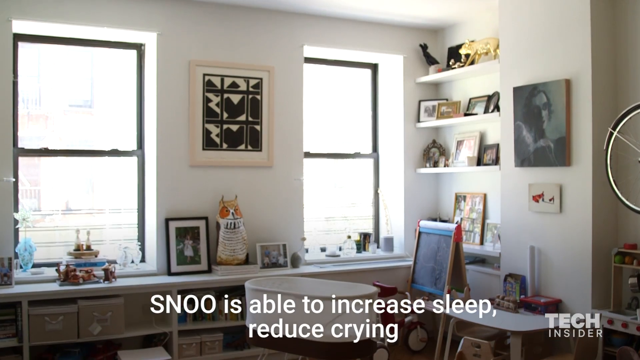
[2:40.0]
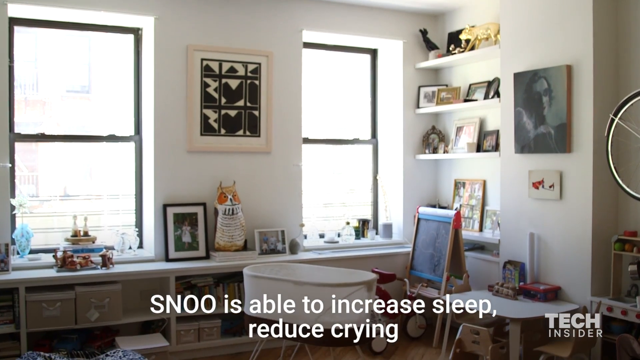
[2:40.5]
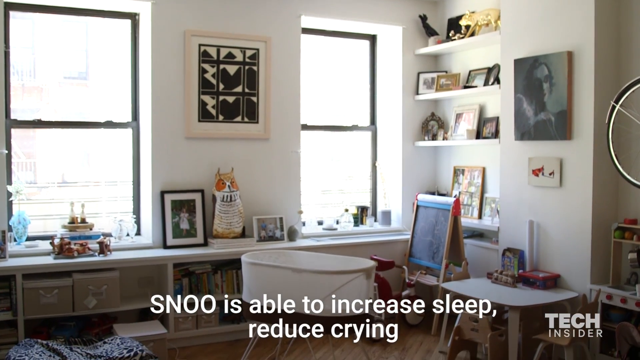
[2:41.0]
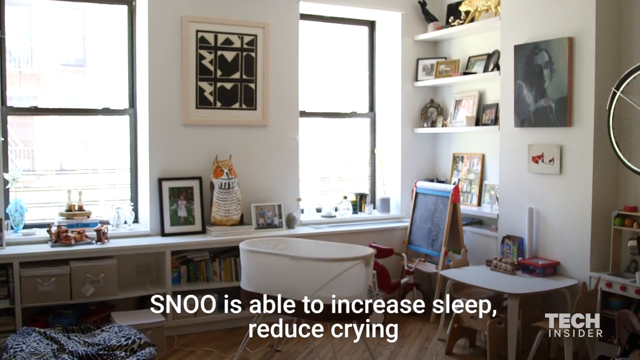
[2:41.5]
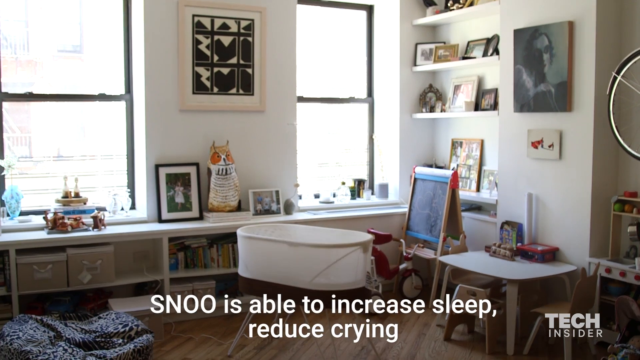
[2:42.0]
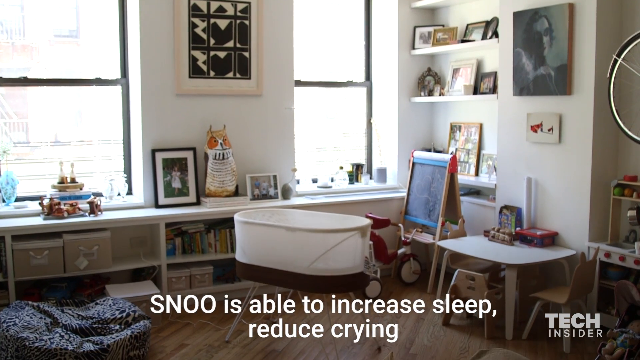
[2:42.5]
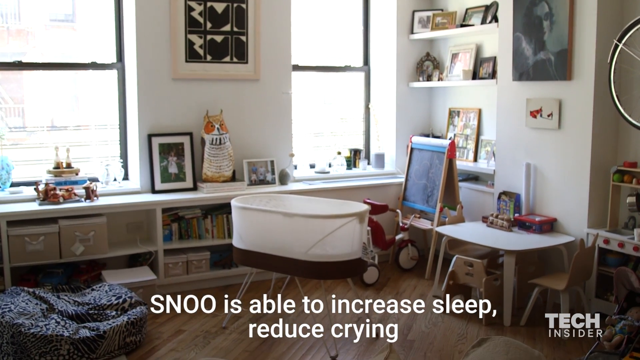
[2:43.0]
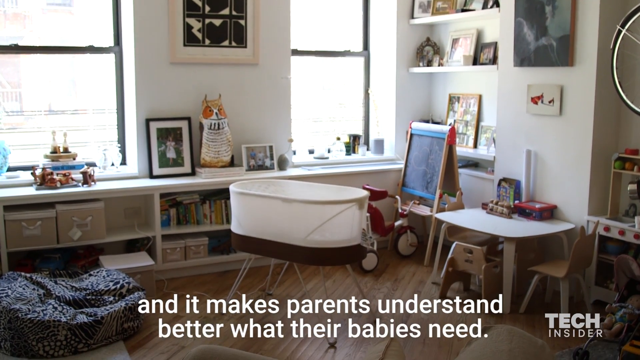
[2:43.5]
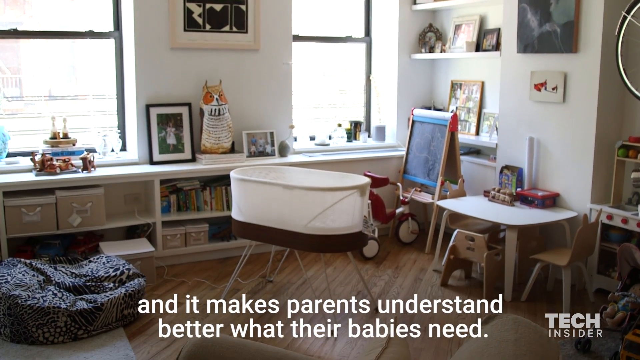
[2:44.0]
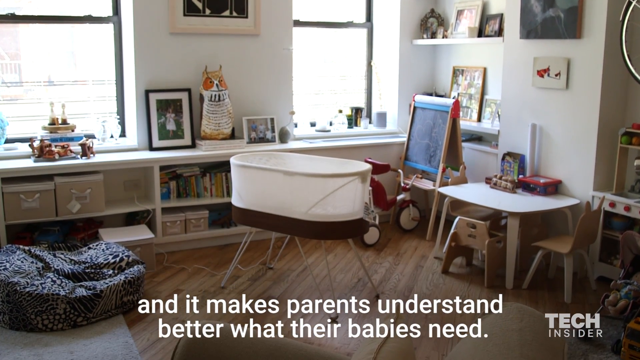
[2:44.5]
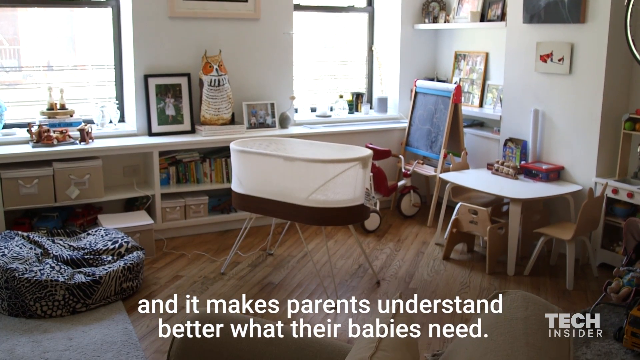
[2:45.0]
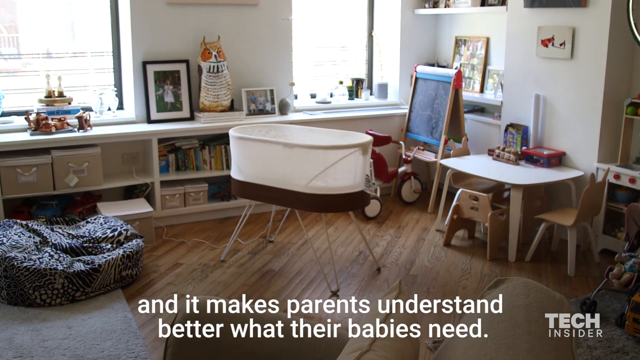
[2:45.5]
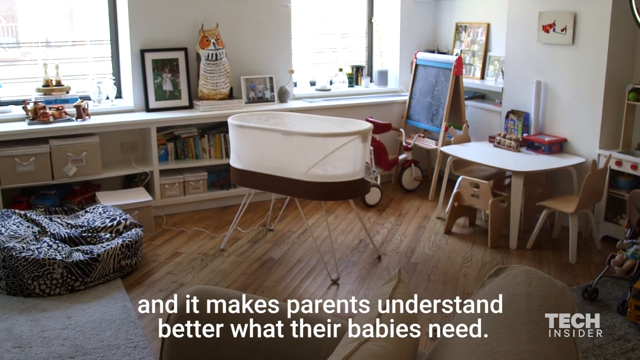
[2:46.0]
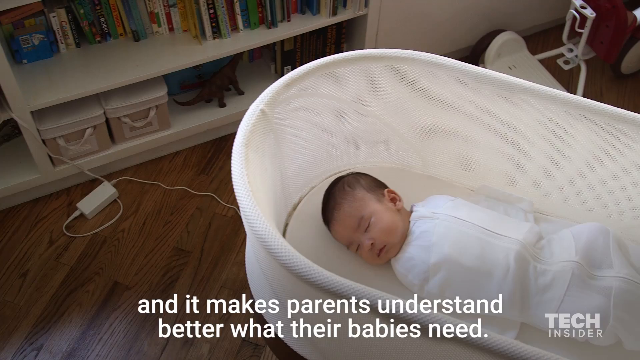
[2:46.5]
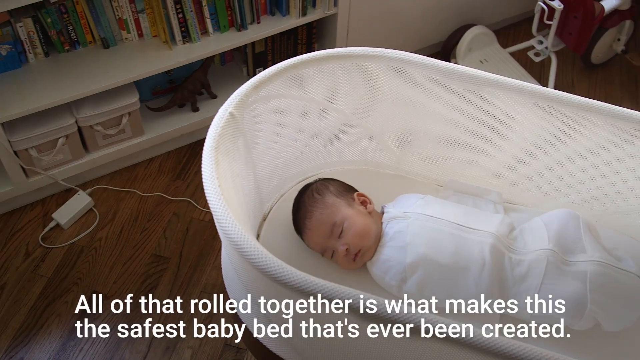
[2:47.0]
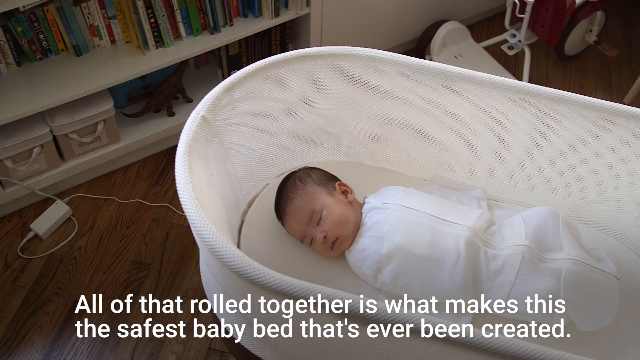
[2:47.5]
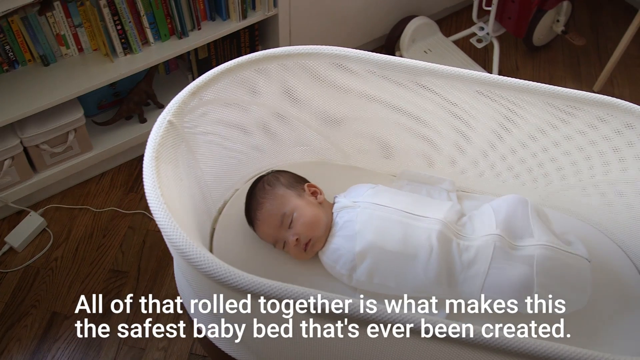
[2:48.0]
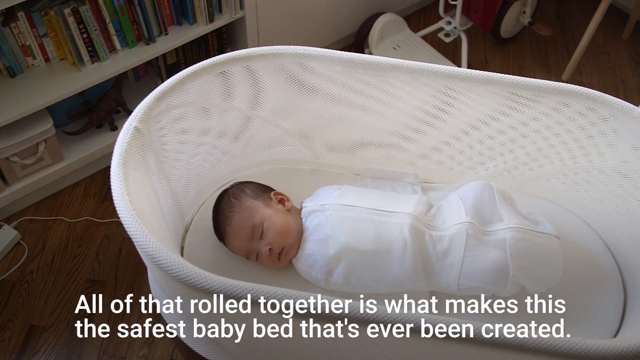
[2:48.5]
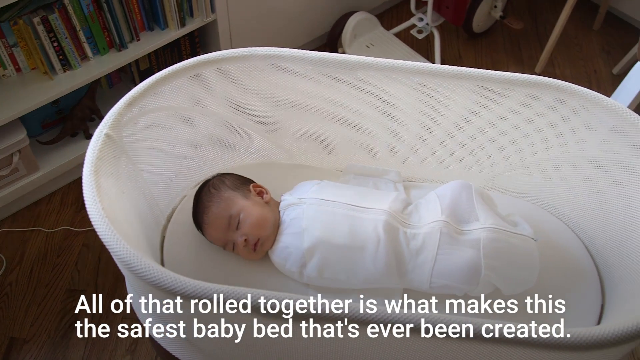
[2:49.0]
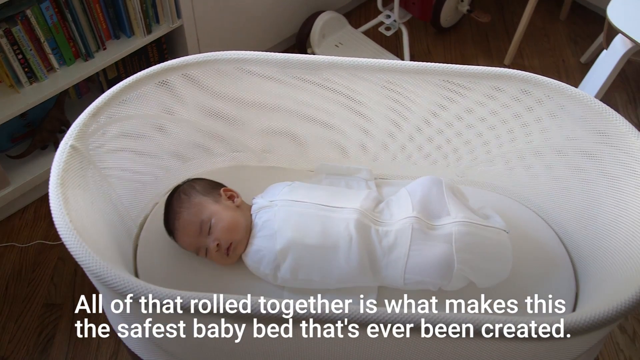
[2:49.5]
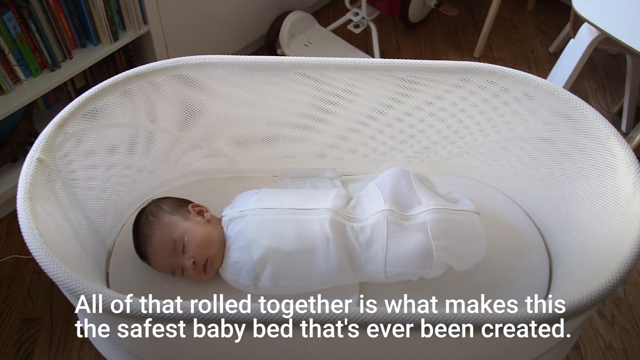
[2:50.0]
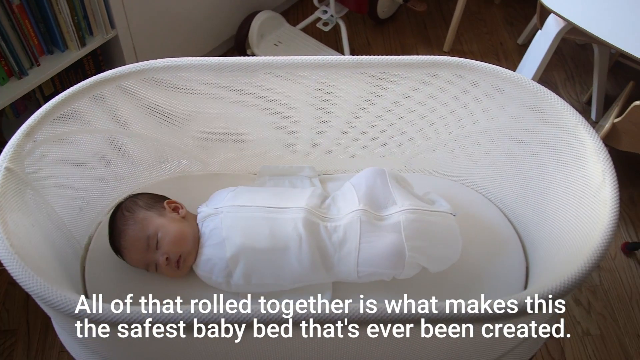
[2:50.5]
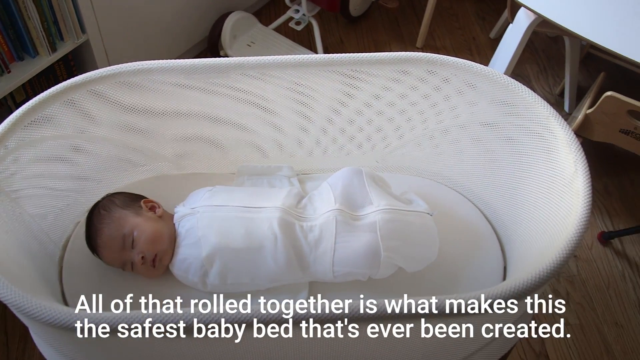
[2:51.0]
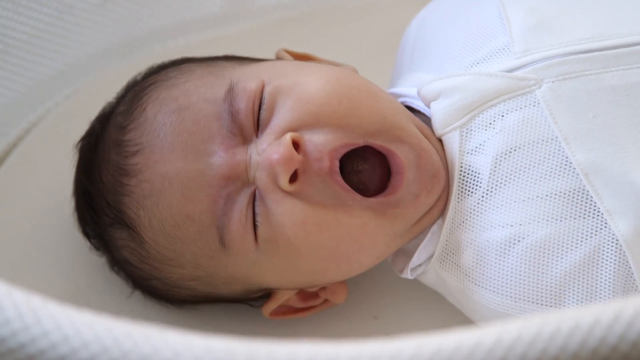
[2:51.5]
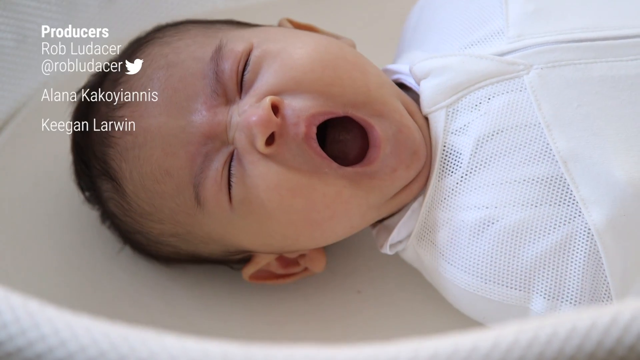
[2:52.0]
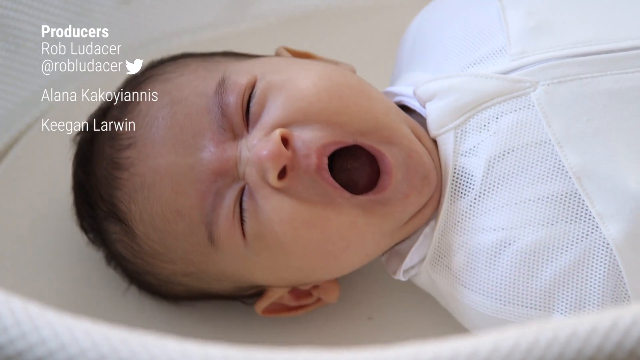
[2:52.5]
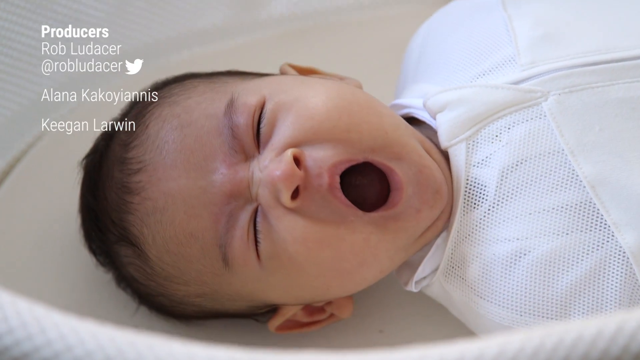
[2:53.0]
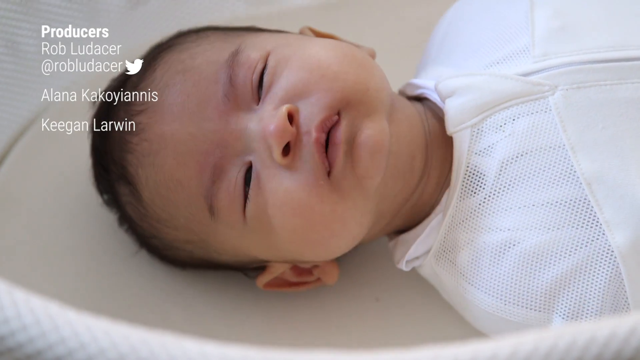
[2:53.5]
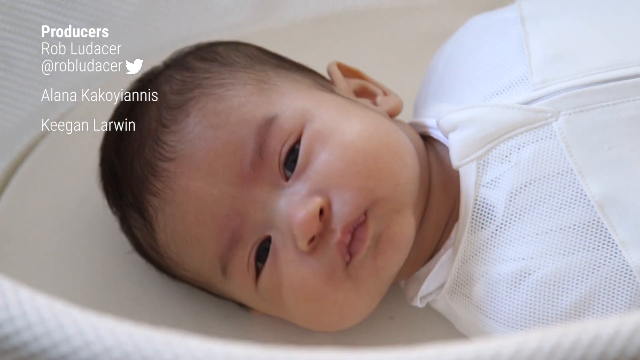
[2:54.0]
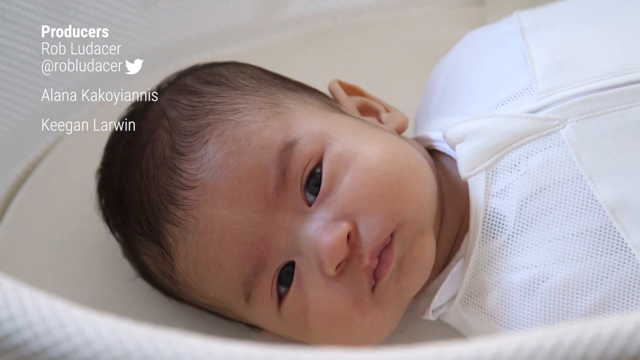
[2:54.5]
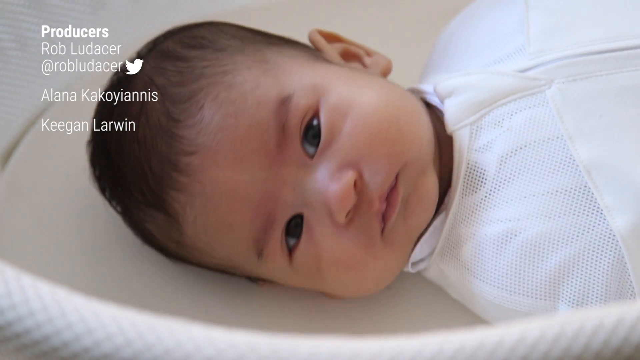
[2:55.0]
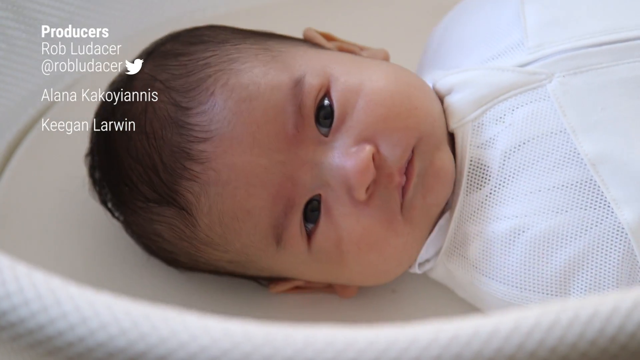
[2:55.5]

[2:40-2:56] A panoramic view shows a room in a house with a crib inside it. The crib holds a small baby who appears to be of Asian descent; the baby looks straight at the camera and yawns, and appears to have his eyes wide awake. White text at the bottom narrates what is happening. The device is named SNOO. Various pictures are in the background, and bright daylight shines through the windows in the back.